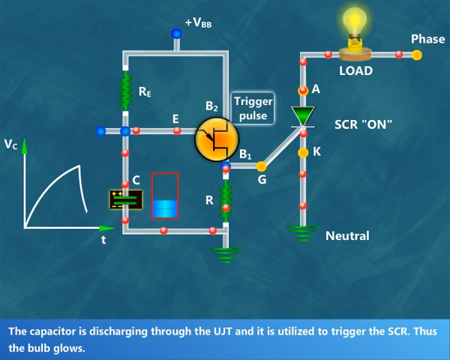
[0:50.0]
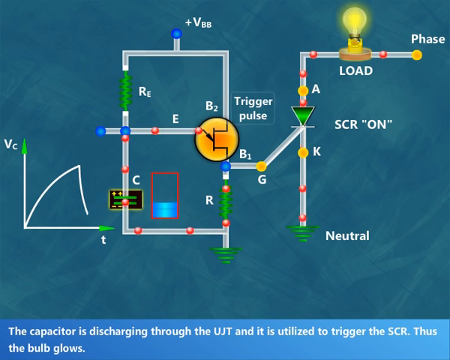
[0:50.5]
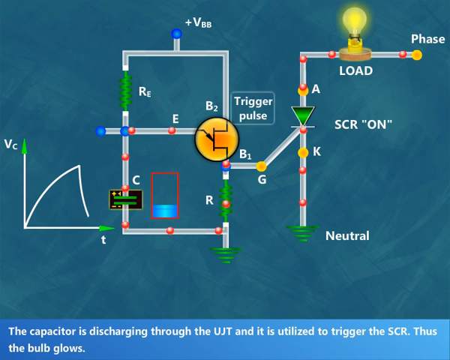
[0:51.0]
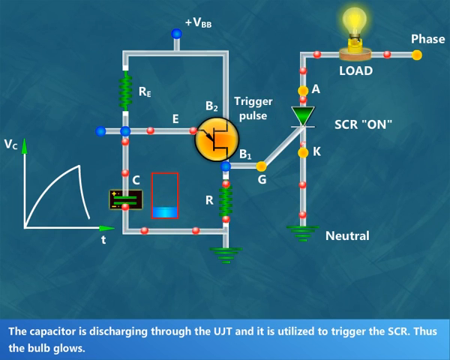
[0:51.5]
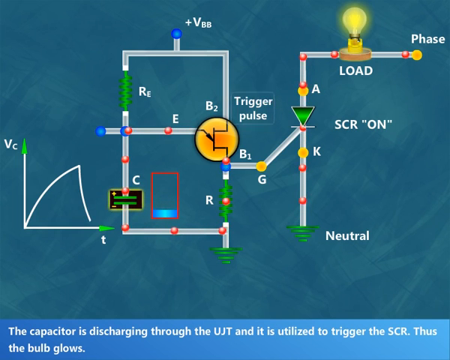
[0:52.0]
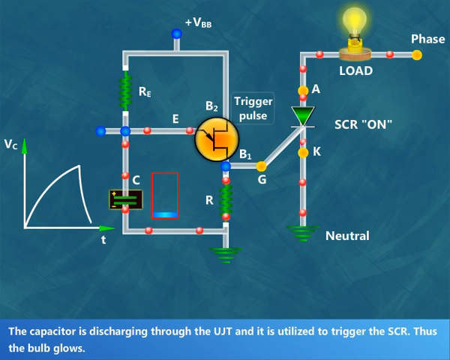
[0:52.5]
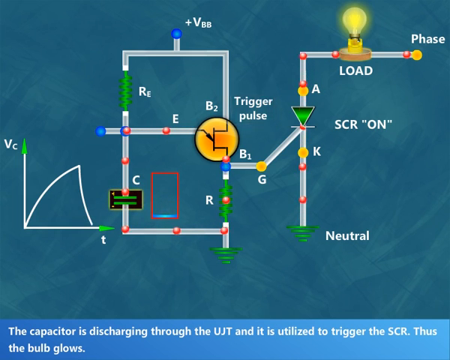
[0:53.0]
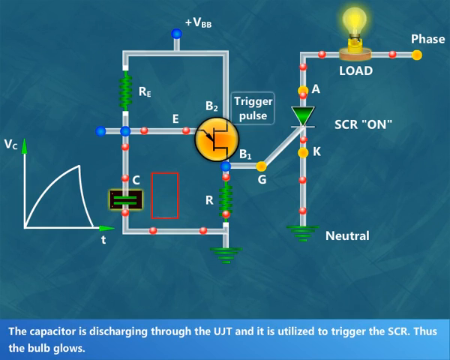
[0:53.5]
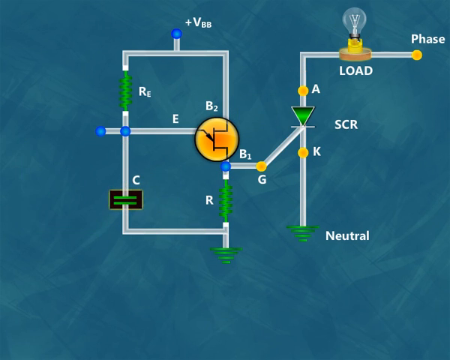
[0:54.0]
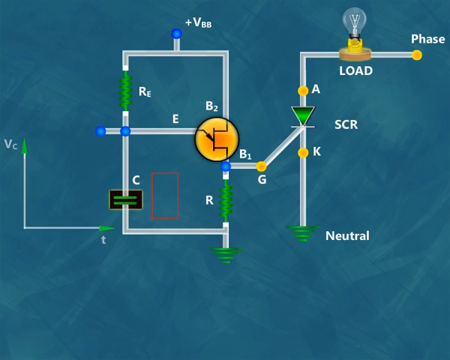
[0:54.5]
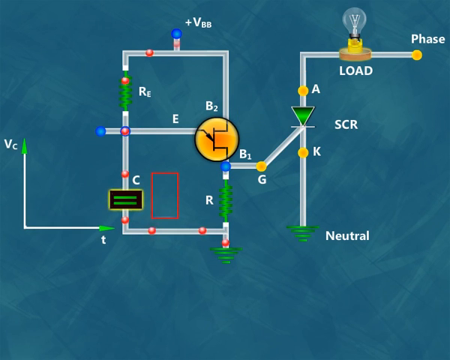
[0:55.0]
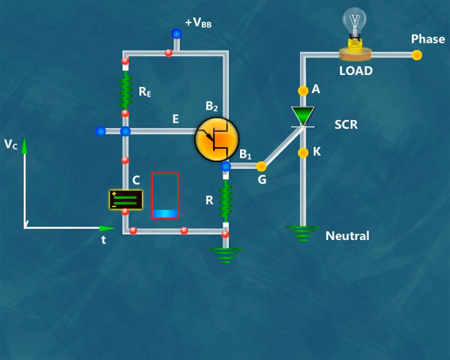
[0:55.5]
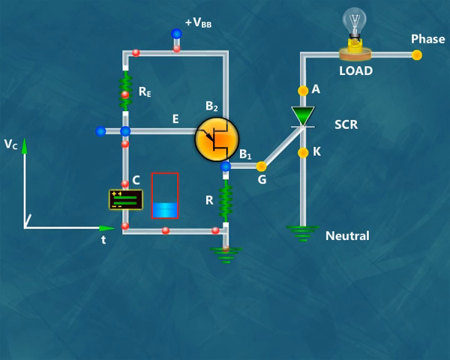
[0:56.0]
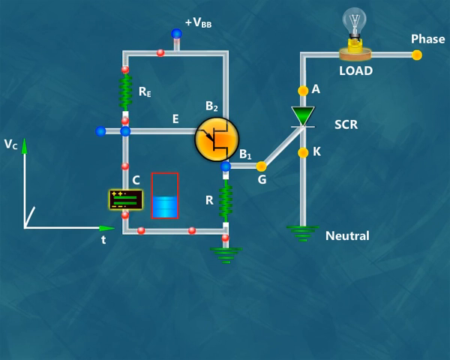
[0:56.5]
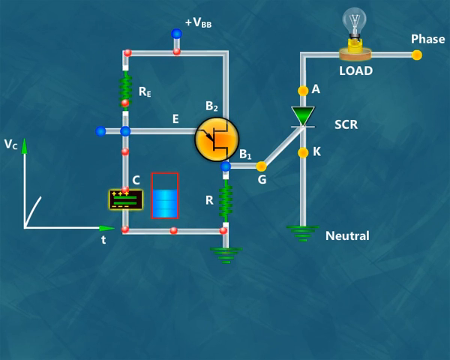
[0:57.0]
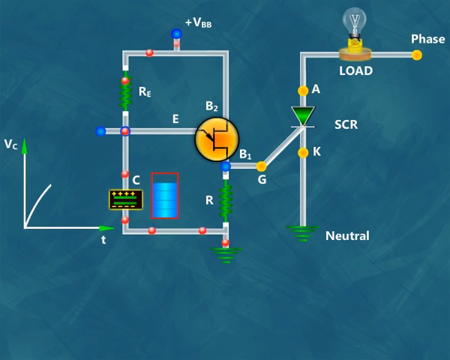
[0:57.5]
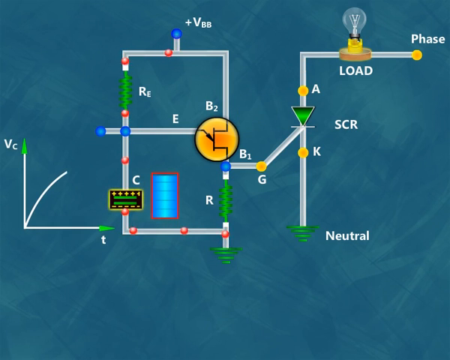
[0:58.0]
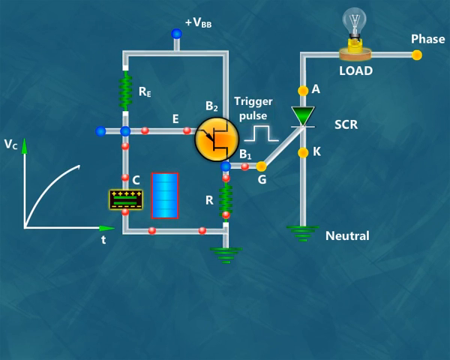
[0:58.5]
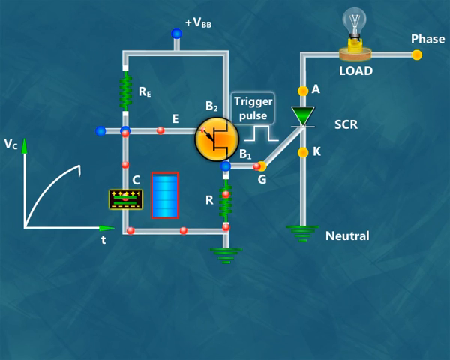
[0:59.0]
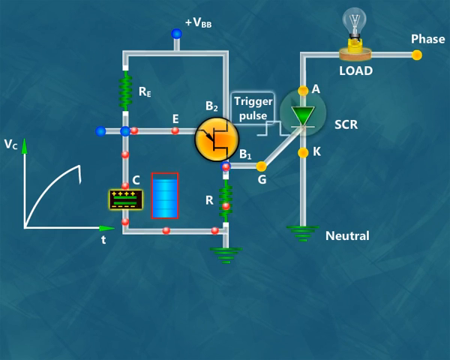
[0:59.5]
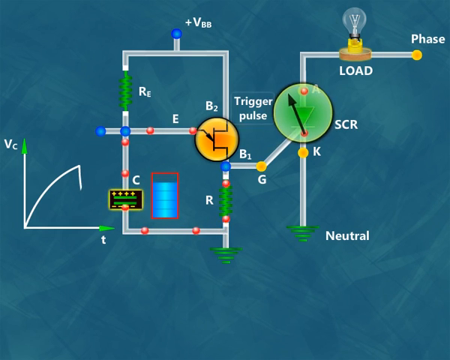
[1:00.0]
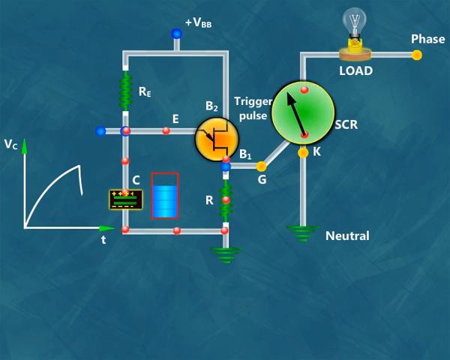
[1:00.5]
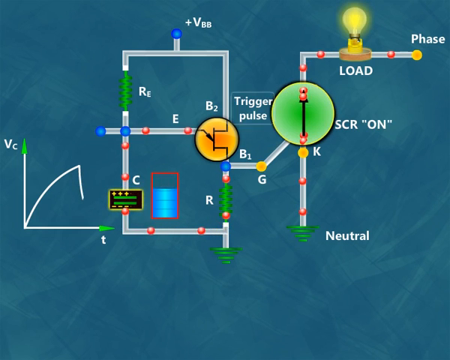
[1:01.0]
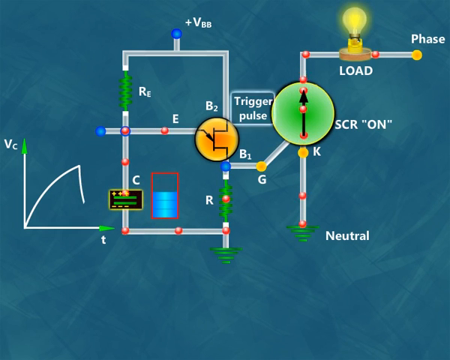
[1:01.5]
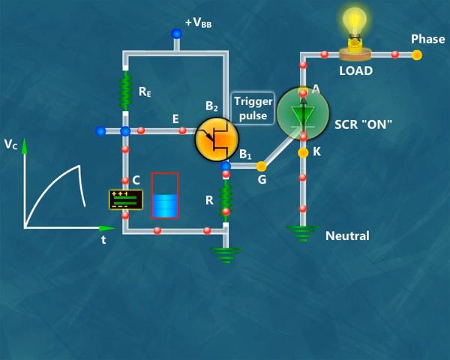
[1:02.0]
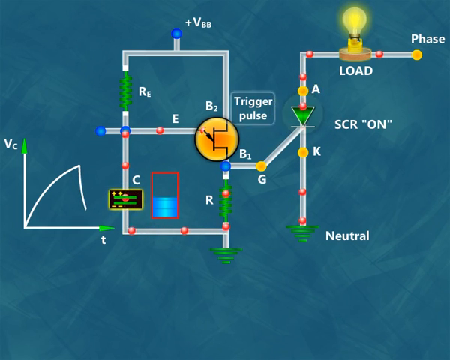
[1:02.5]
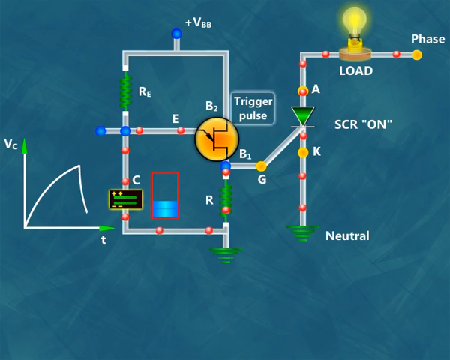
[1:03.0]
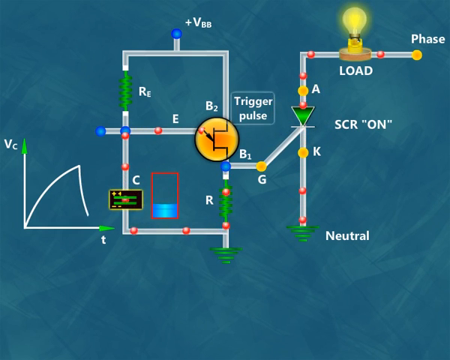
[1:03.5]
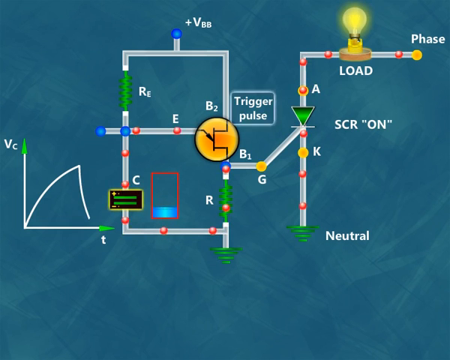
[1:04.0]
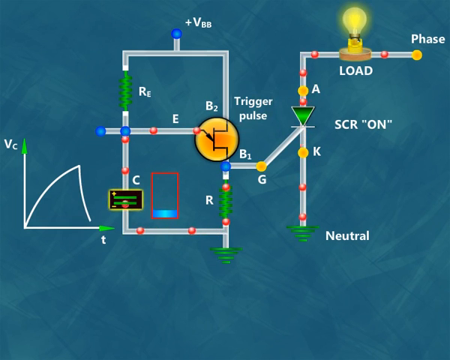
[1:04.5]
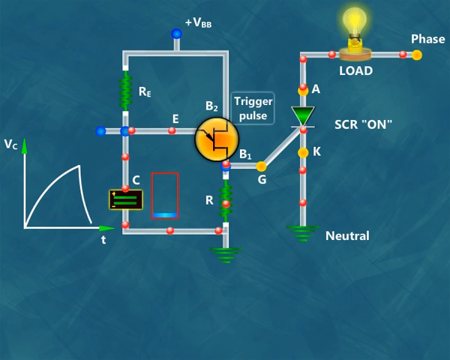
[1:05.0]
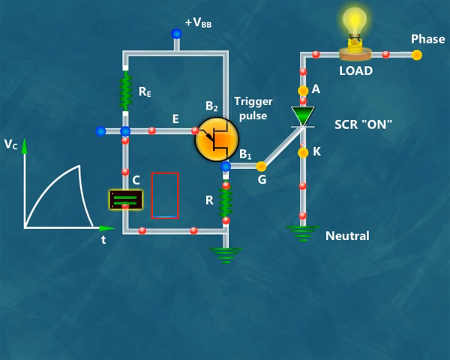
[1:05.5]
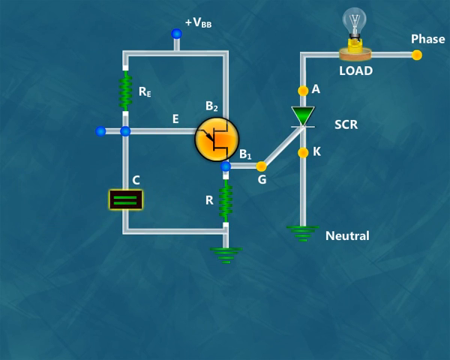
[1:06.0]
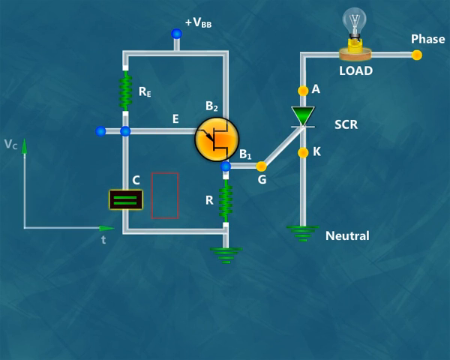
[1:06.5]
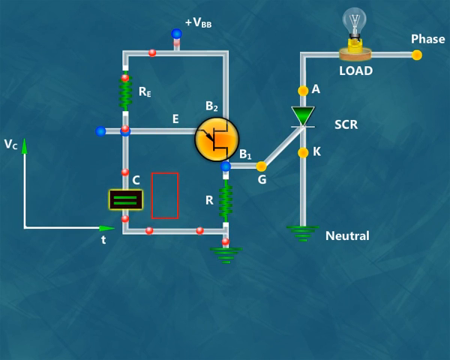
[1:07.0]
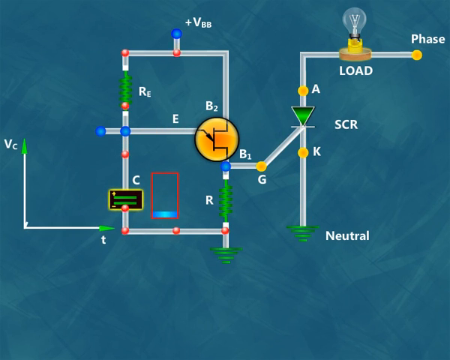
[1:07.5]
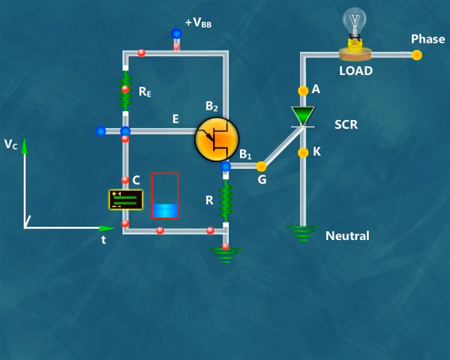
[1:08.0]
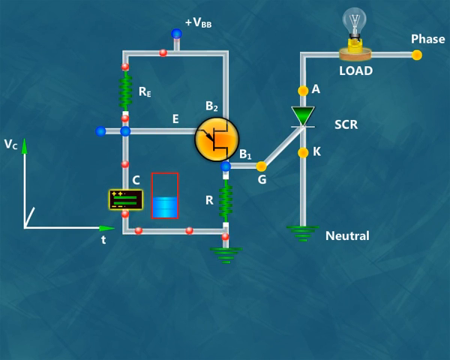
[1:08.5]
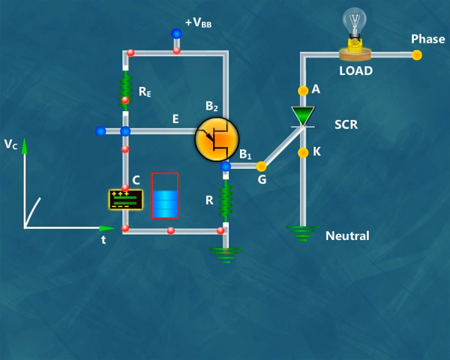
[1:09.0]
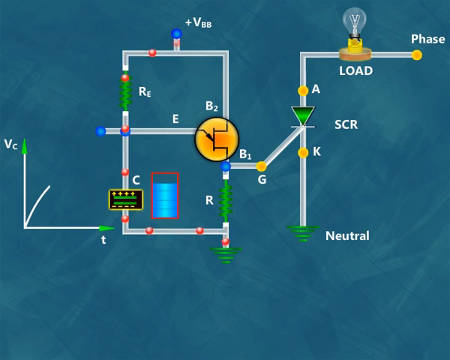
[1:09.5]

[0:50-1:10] The circuit has a trigger pulse part and a voltage labeled BB, which apparently holds the most voltage. The light bulb load is lit. There is an amplifier, a neutral, and an SCR, and the energy flows back and forth, clockwise and counterclockwise.